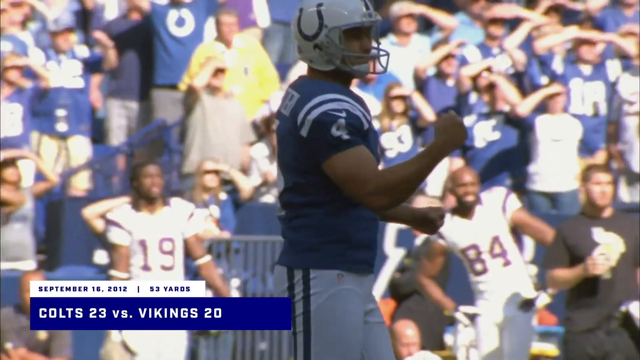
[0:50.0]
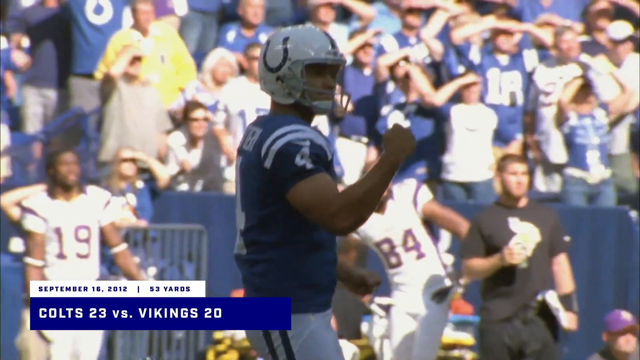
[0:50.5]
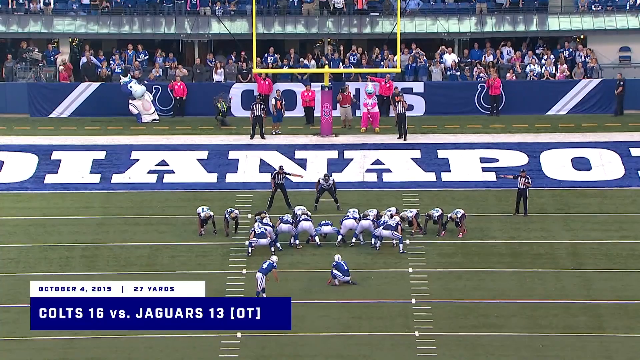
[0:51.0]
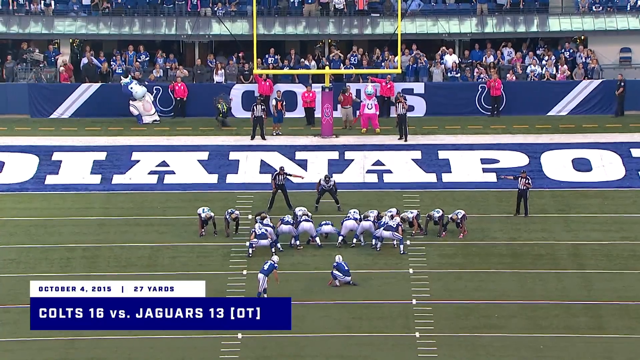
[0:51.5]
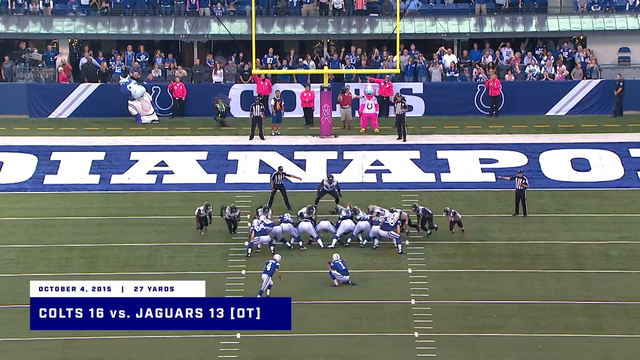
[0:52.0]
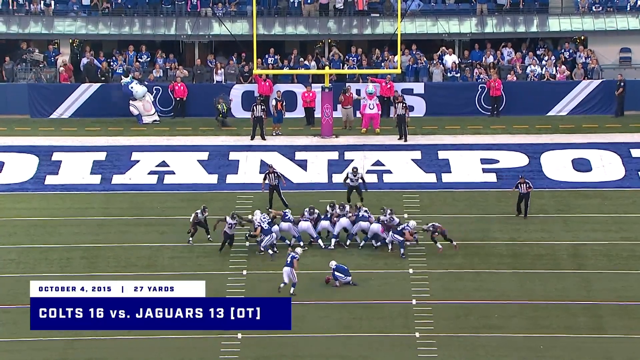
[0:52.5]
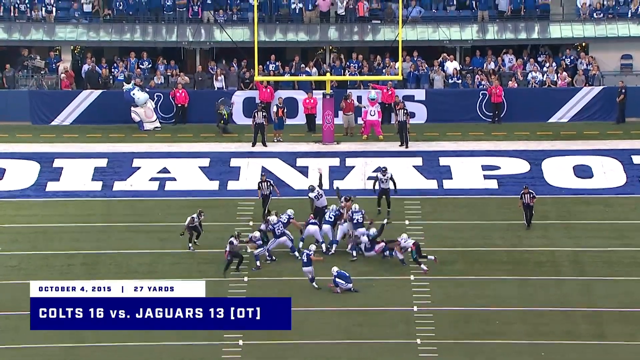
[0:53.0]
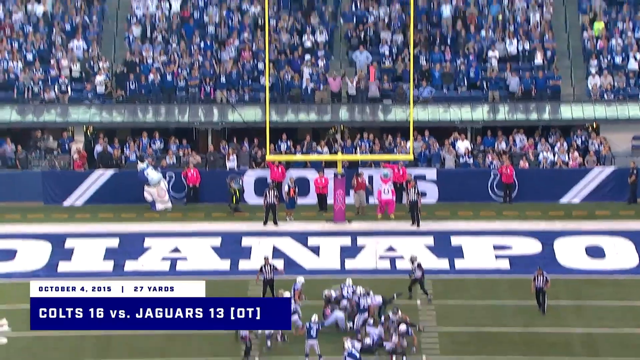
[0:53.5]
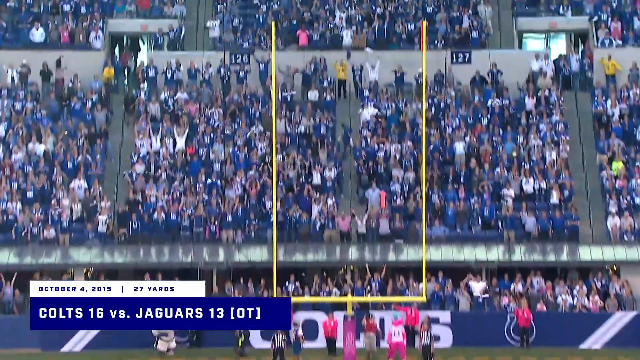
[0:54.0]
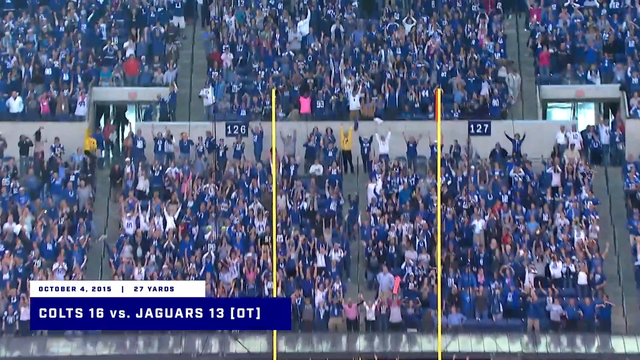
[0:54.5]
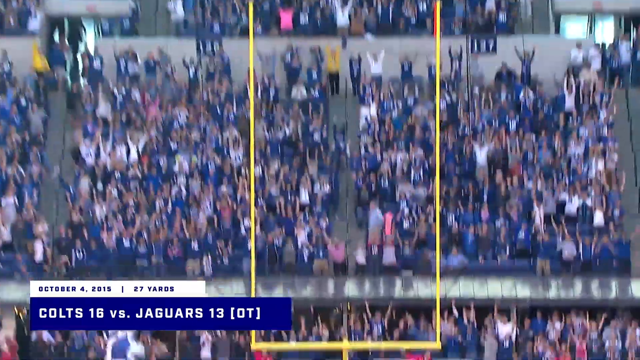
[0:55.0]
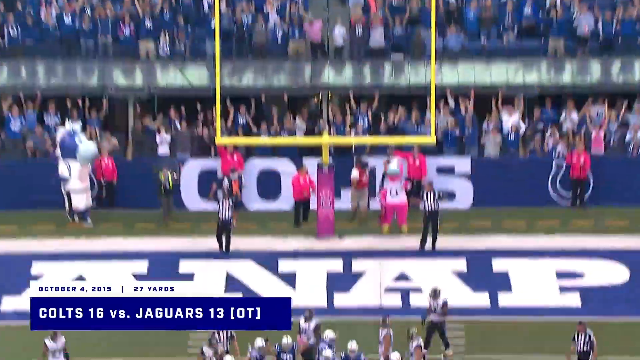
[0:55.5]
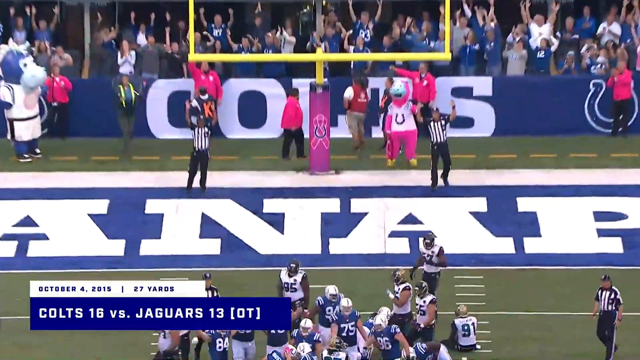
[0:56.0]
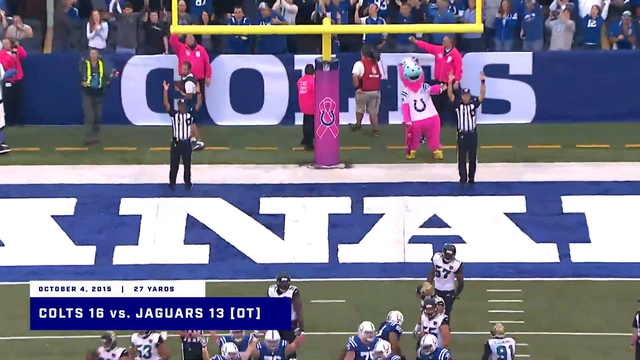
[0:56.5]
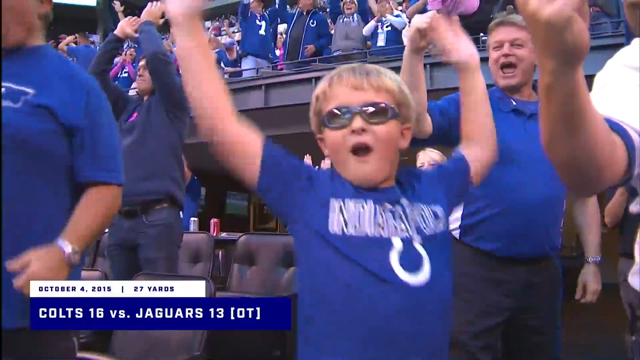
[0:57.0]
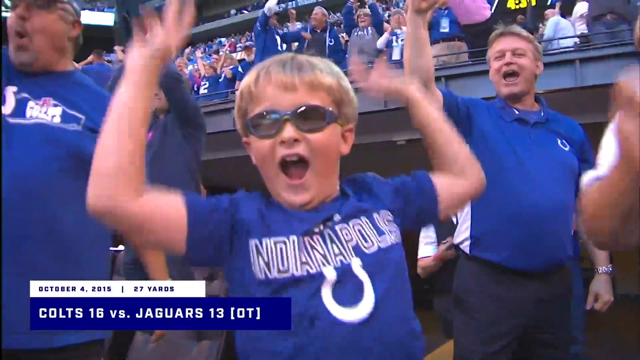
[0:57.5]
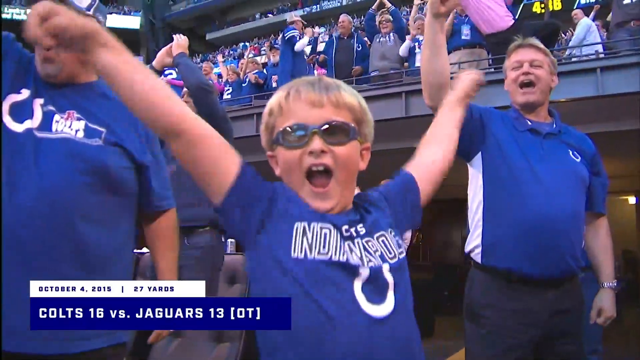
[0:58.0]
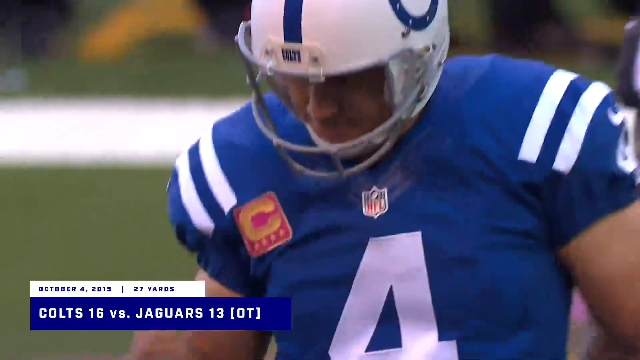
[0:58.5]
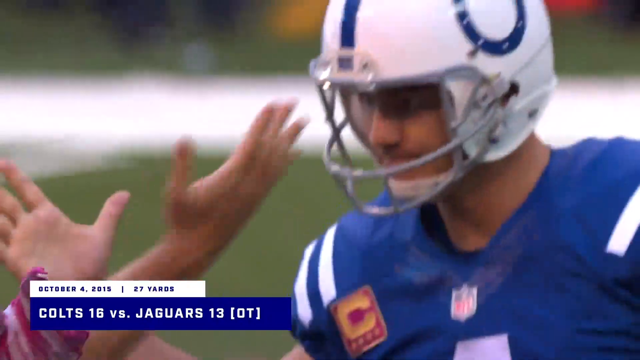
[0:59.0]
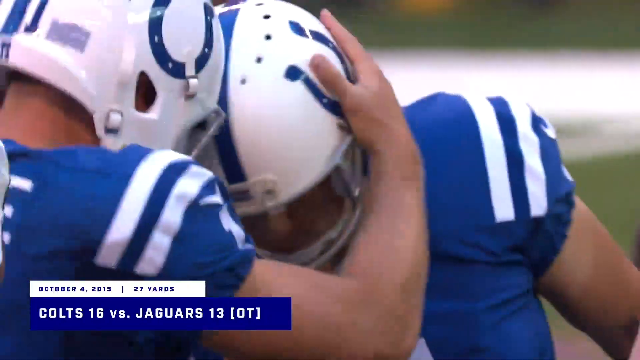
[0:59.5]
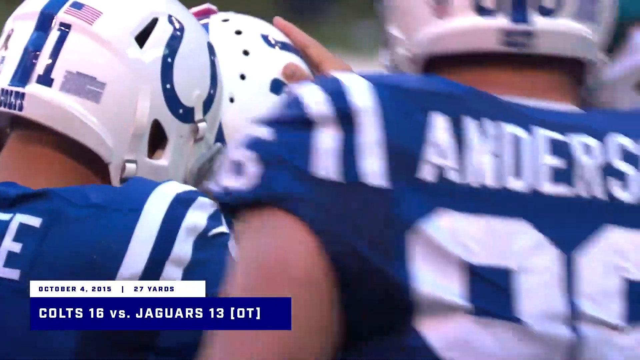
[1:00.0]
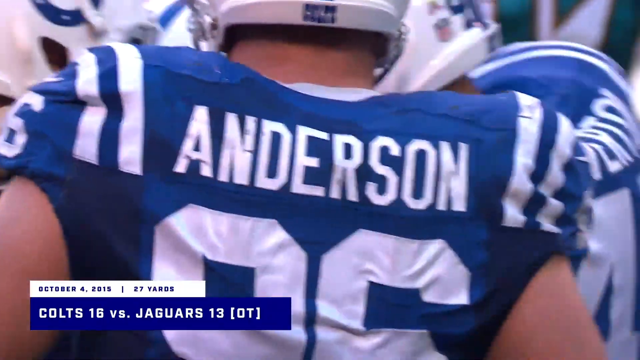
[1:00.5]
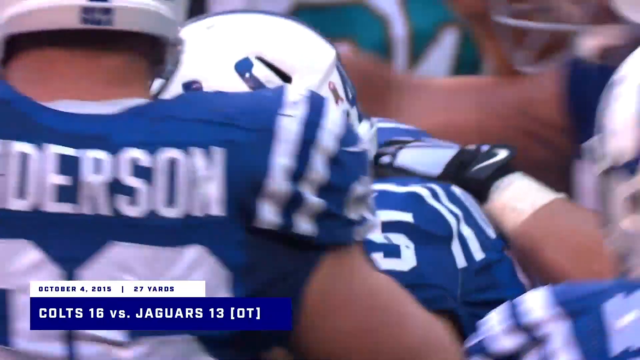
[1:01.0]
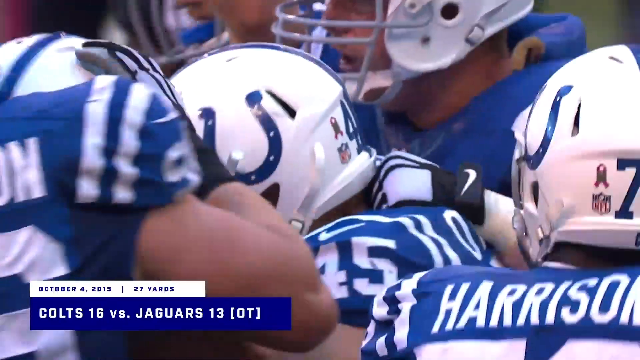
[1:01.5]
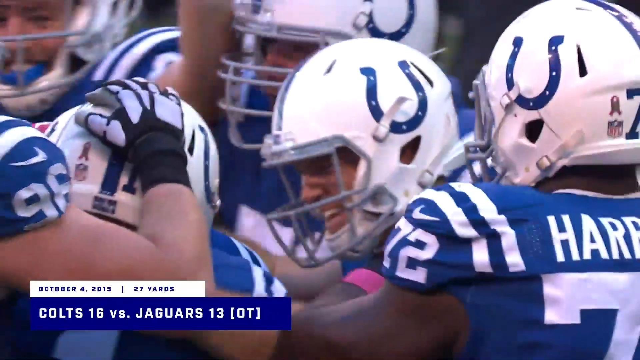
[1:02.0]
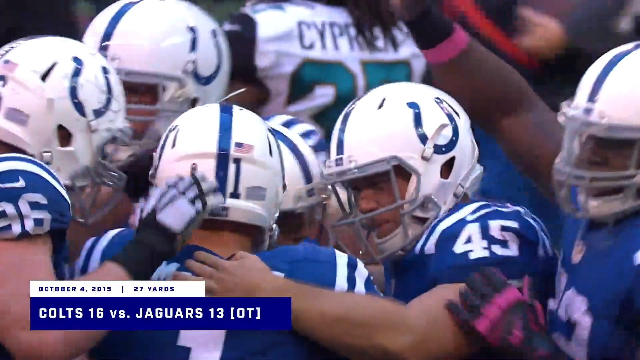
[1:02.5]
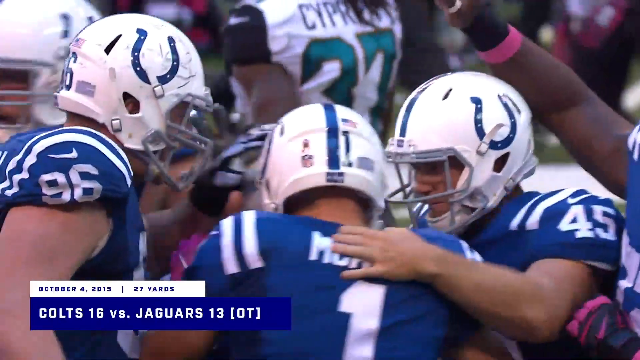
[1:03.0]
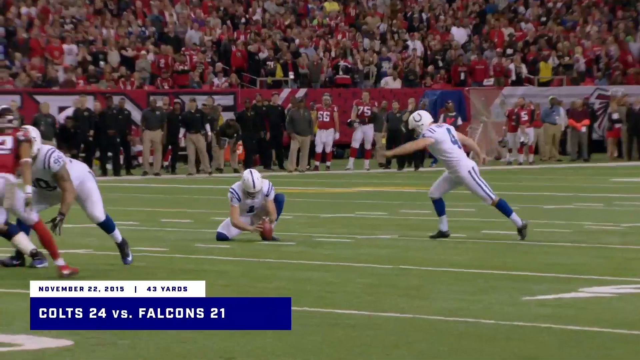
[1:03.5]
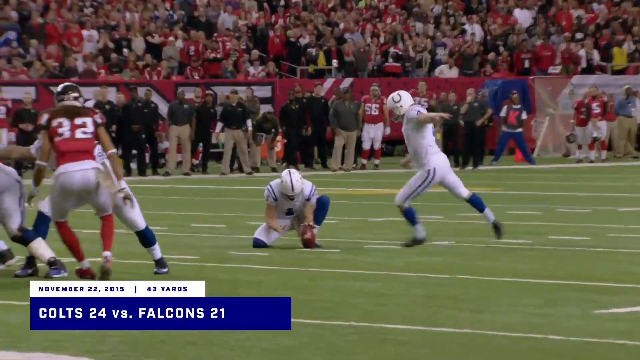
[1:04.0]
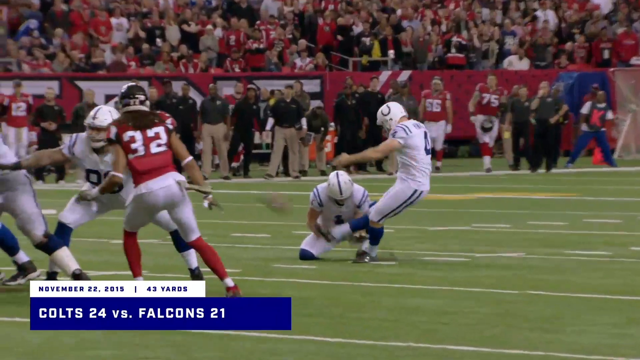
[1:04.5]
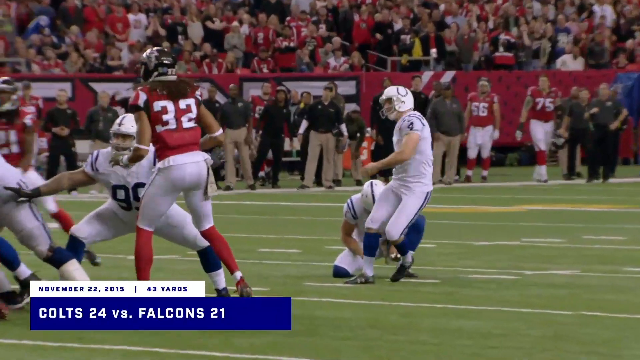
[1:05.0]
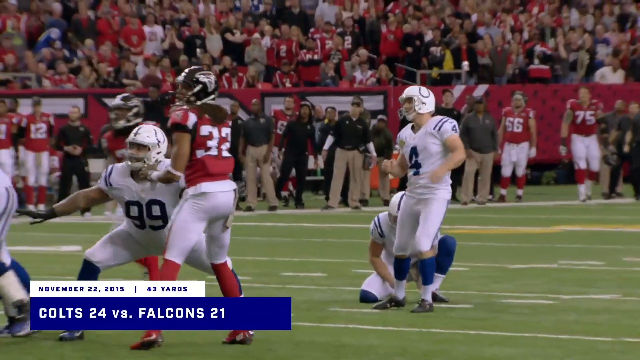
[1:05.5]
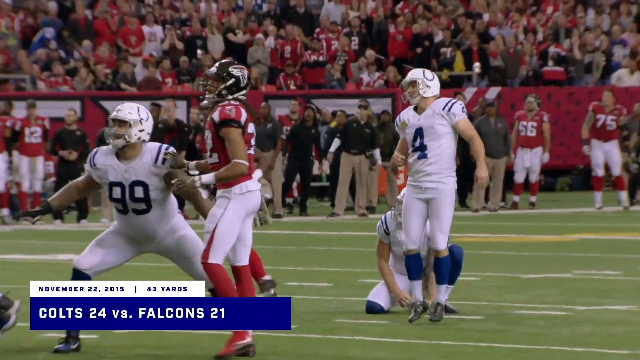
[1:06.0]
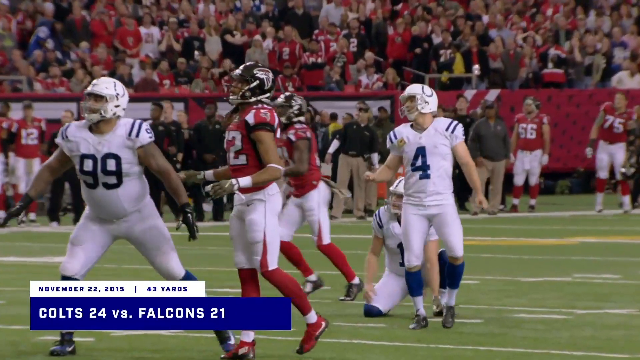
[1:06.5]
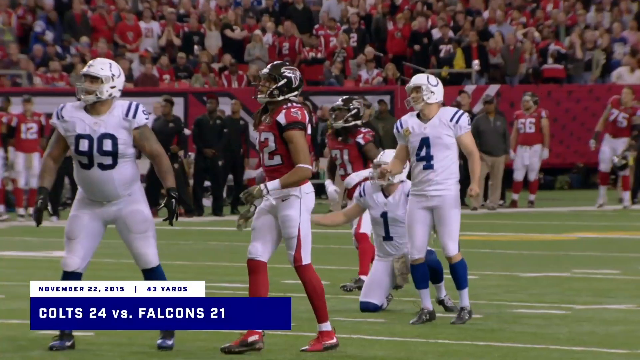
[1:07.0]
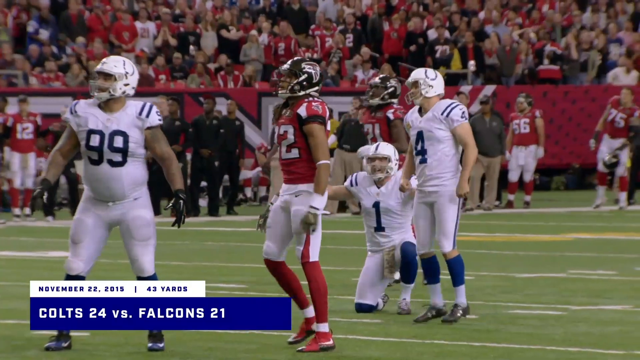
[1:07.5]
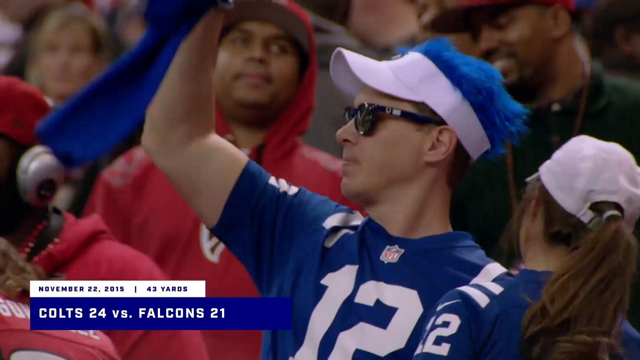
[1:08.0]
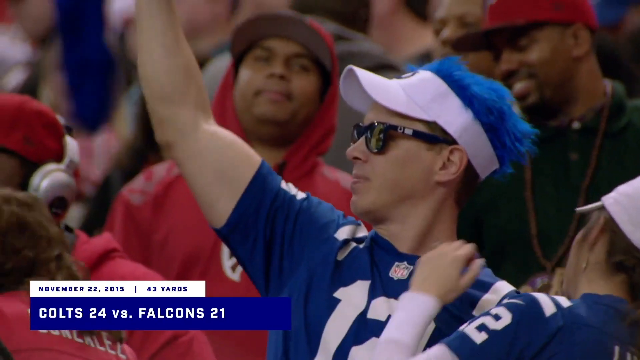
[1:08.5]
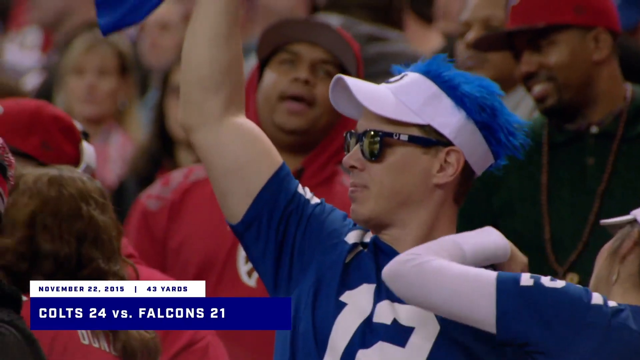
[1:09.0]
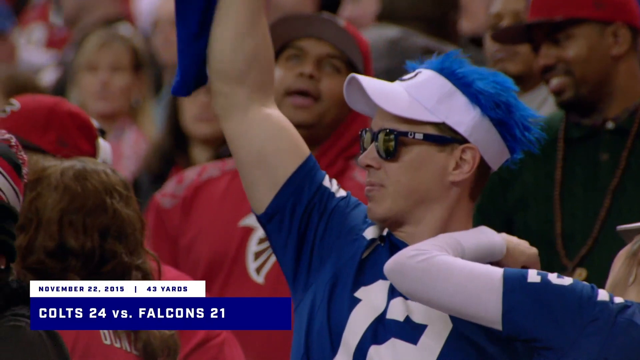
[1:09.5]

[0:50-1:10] An overhead angle shows the players and the goalpost. The Colts kicker is playing against the Jaguars, with the score at the bottom reading 16-13 and the word "overtime" shown next to the score. The kicker successfully kicks the field goal. At first the kicker wears a blue uniform with white lettering, then the video cuts to a different game where the player wears a white jersey with blue lettering. At the end, footage shows fans cheering.